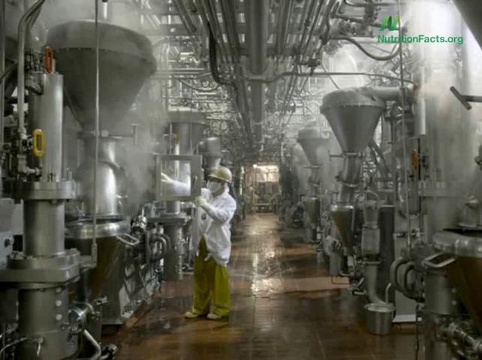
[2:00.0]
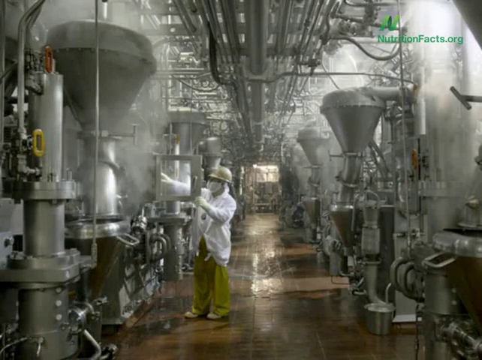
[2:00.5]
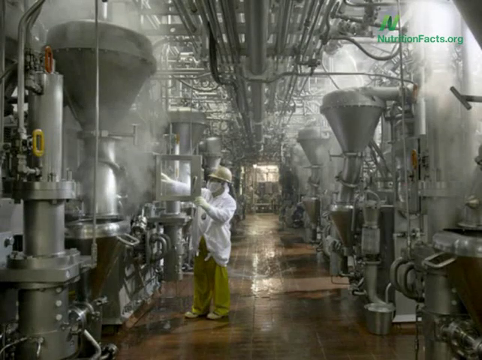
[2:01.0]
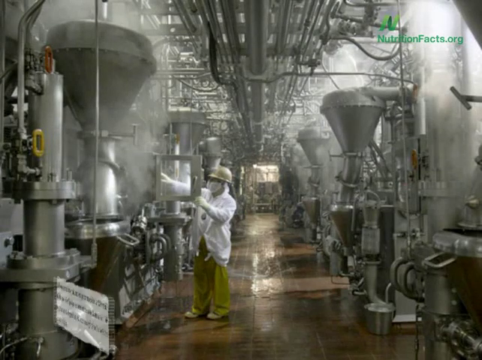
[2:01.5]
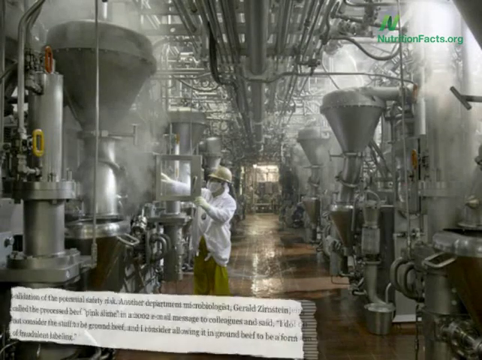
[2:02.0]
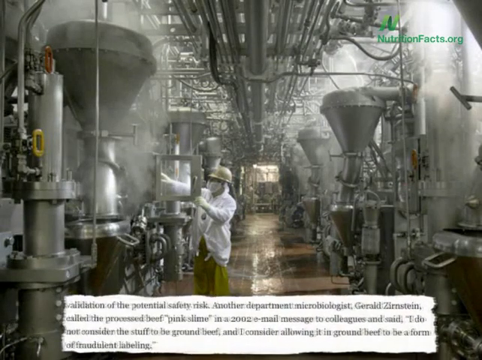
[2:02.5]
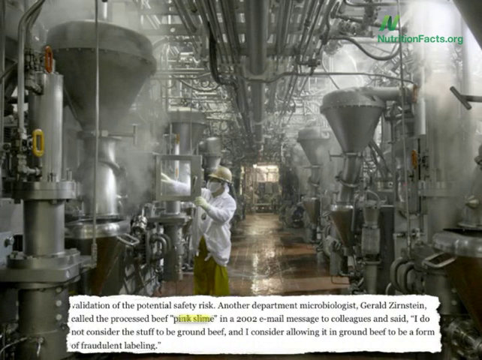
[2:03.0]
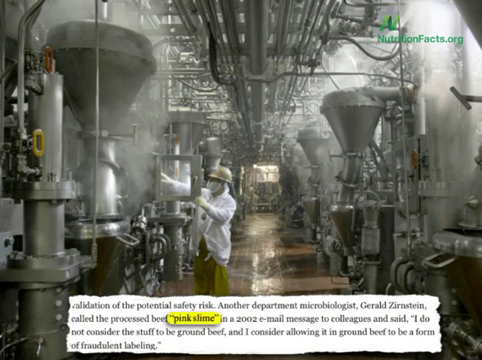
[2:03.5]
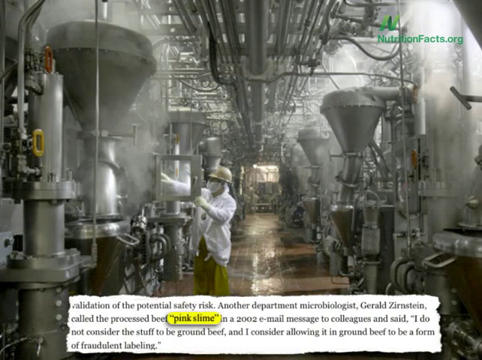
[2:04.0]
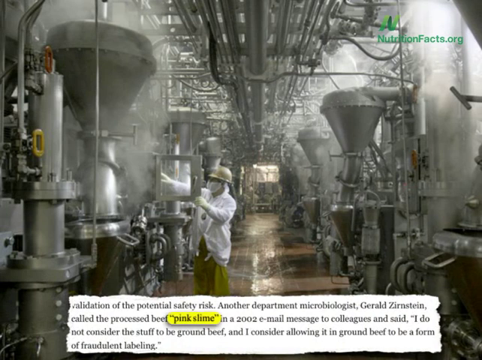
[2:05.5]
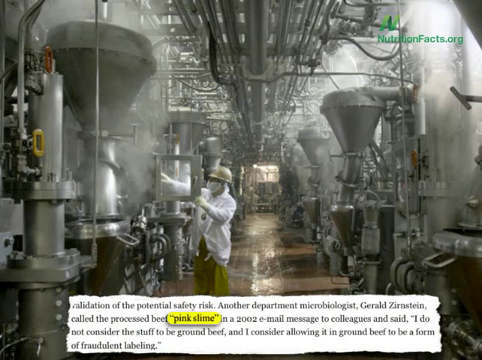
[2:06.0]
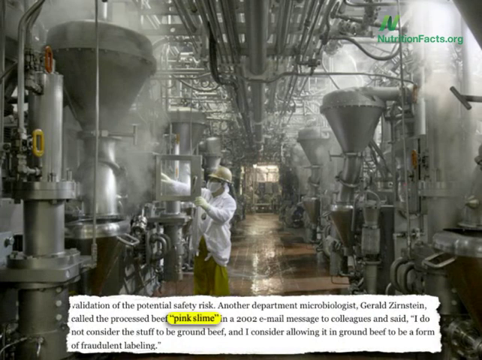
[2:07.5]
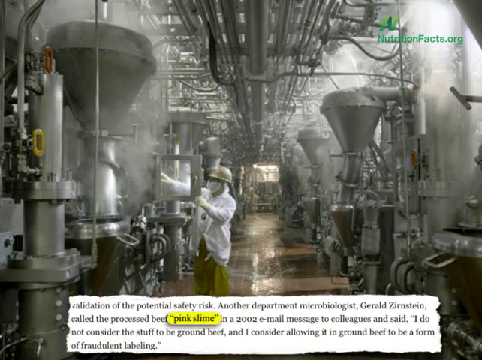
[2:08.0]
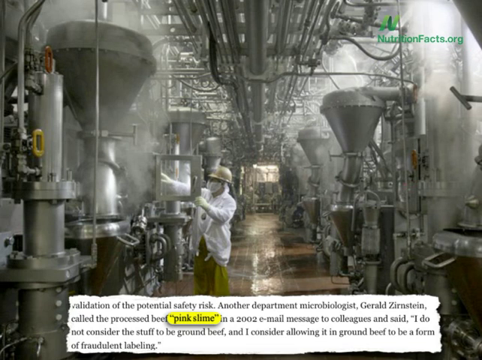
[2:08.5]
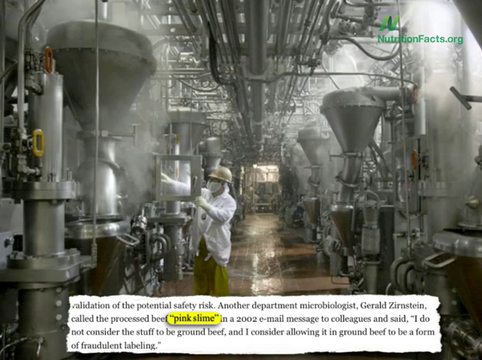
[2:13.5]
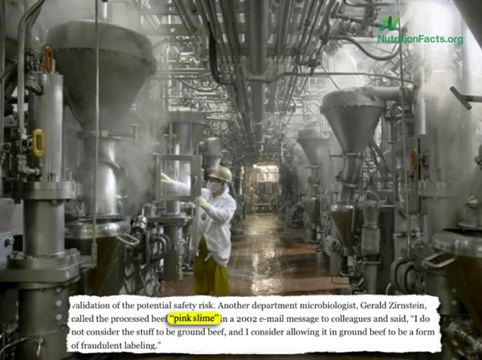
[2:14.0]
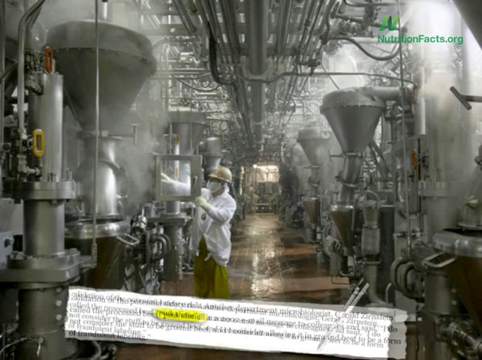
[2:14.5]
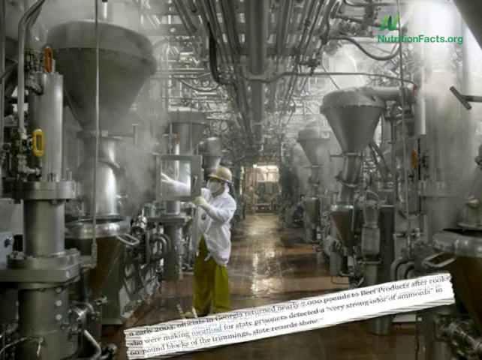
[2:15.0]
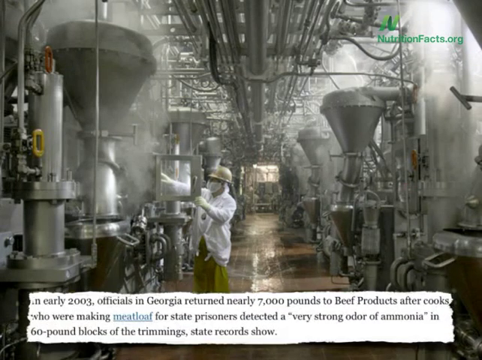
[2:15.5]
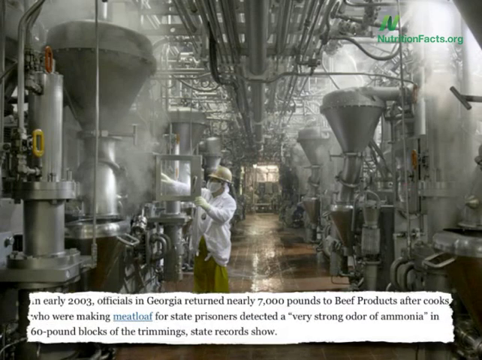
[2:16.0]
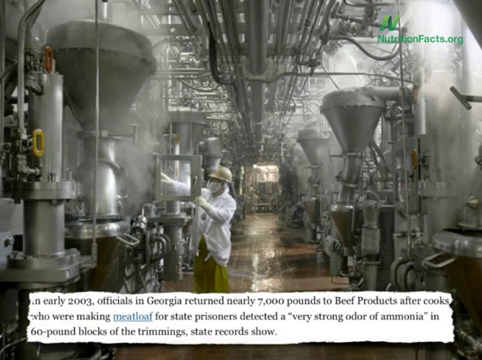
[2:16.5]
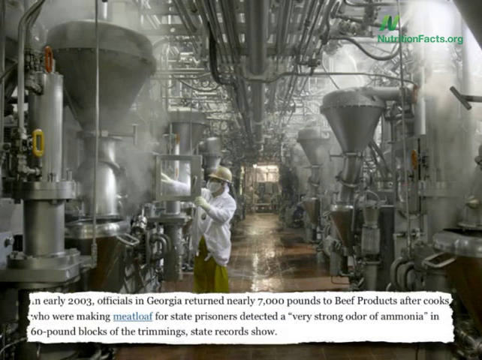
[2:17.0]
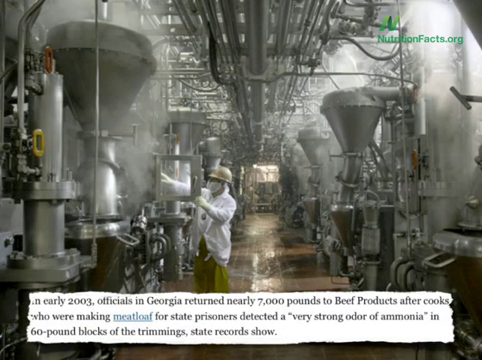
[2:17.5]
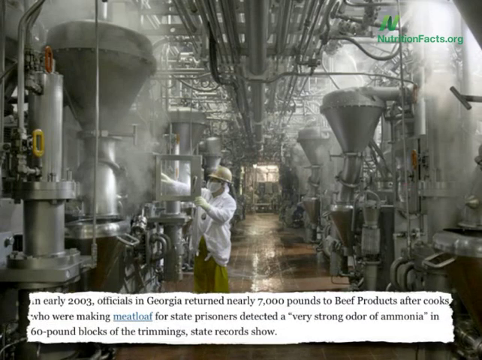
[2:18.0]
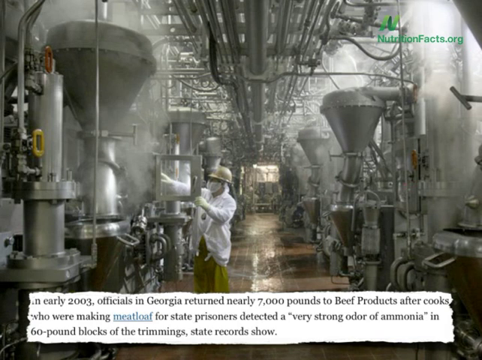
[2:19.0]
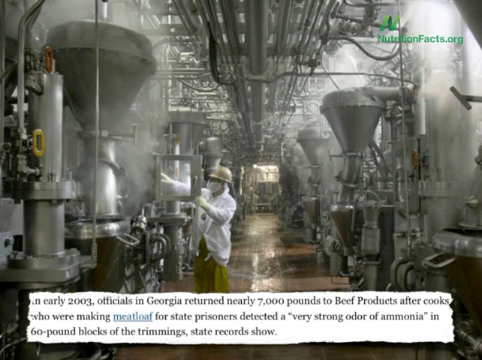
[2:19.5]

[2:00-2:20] A worker is inside a very complicated-looking factory workplace. The worker wears yellow pants, a white jacket, a hard hat and a mask. Silver pipes and tanks are all around the worker, and a lot of steam is seen in several areas. Words come across the bottom of the screen: "validation of the potential safety risk. Another department microbiologist, Gerald Zernstein, called the process beef pink slime in a 2002 email message to colleagues and said, I do not consider the stuff to be ground beef. I consider allowing it in ground beef to be a form of fraudulent labeling." The text continues, "in early 2003, officials in Georgia returned nearly 7,000 pounds to beef products after cooks who were making meatloaf for state prisoners detected a very strong odor of ammonia in 60-pound blocks of the trimmings state records show." The nutritionfacts.org logo is in the upper right-hand corner.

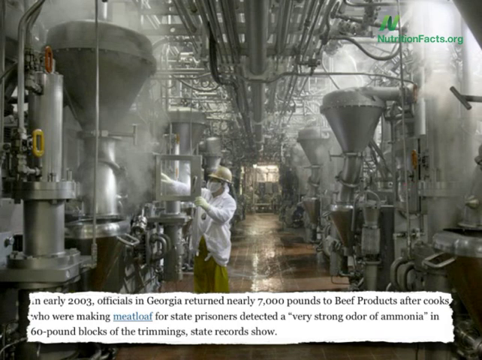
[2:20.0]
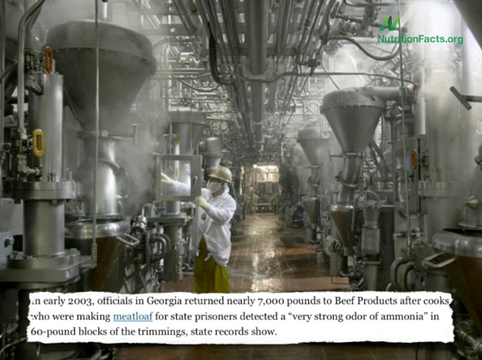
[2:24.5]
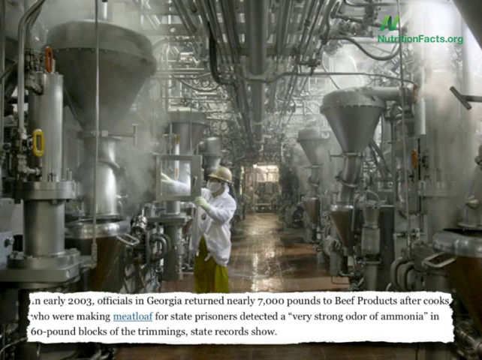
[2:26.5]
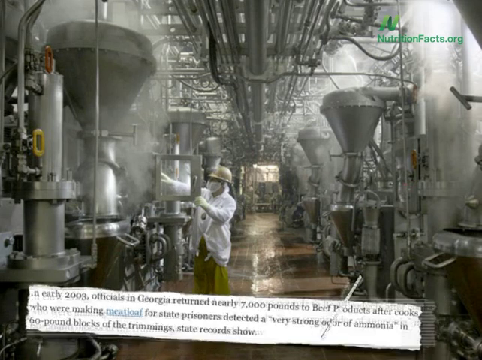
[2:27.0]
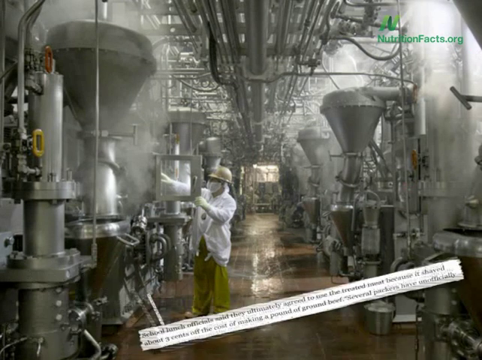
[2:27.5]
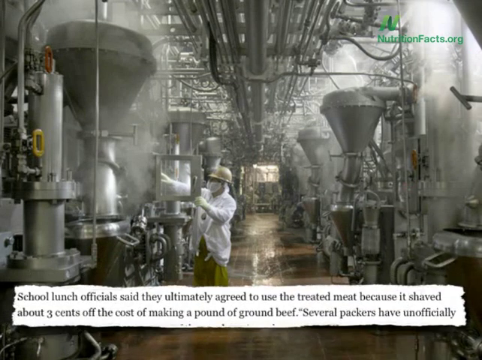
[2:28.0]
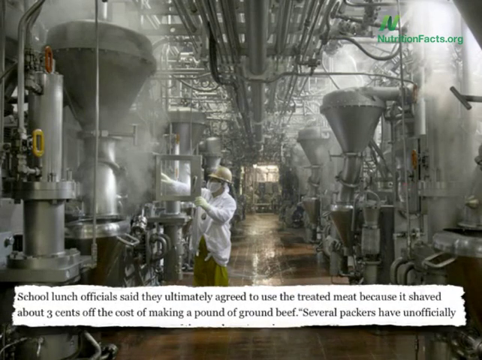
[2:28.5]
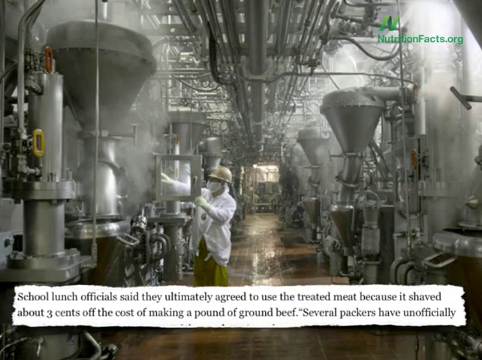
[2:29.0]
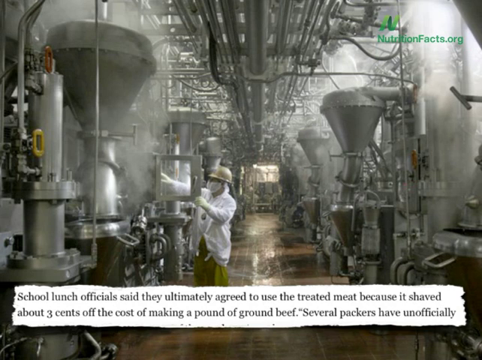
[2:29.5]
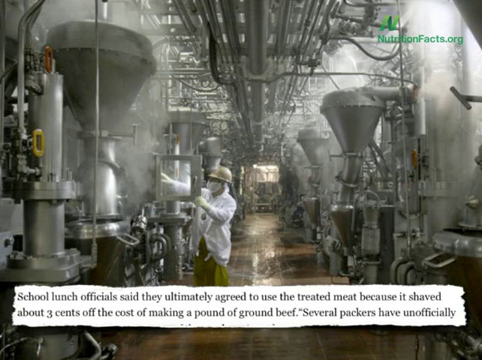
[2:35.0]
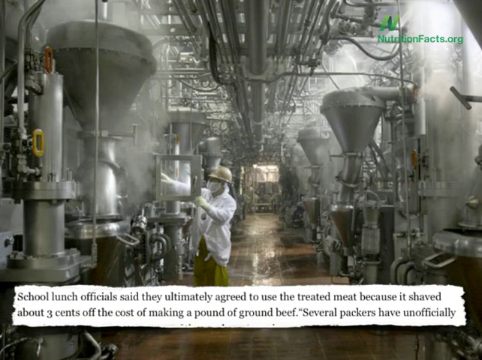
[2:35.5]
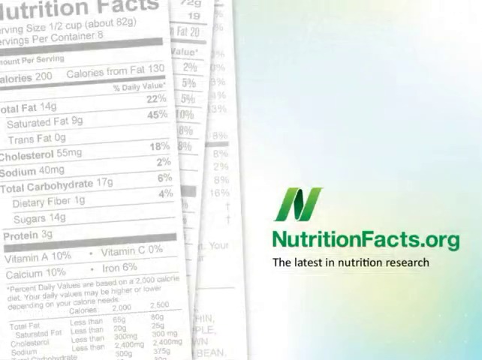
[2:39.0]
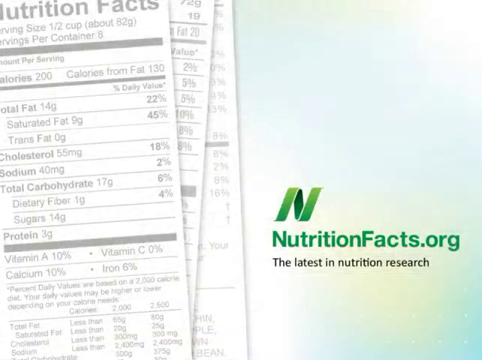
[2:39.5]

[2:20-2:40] At the bottom of the screen are the words "In early 2003, officials in Georgia returned nearly 7,000 pounds to beef products after cooks who were making meatloaf for state prisoners detected a very strong odor of ammonia in 60-pound blocks of the trimmings state records show." There is a lot of steam in the large room. Further text reads "School lunch officials said they ultimately agreed to use the treated meat because it shaved about three cents off the cost of making a pound of ground beef. Several packers have unofficially". There are several stainless steel pipes and steam. The worker wears a white coat, yellow pants, a light golden hard hat, white gloves and a white mask. There are several large tanks, the floor is brown tile, and multiple long stainless steel pipes run the length of the ceiling.